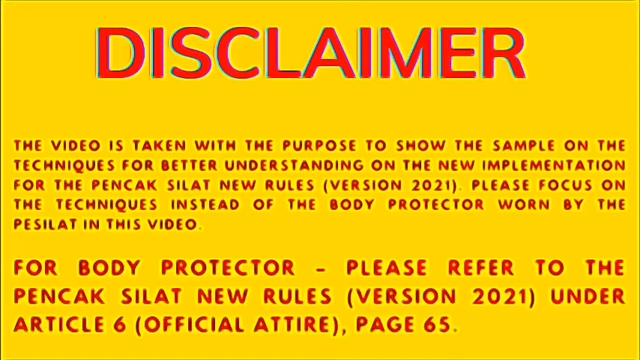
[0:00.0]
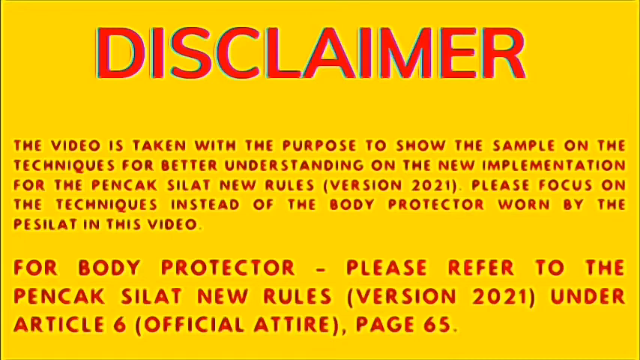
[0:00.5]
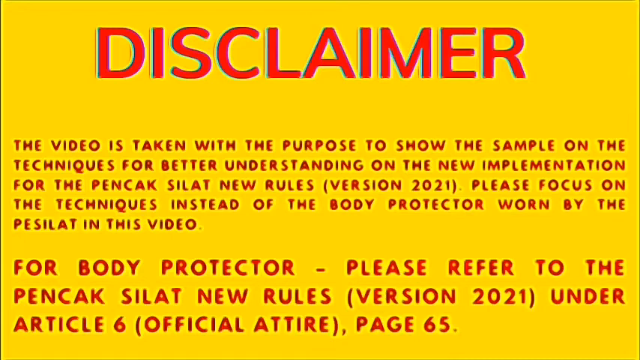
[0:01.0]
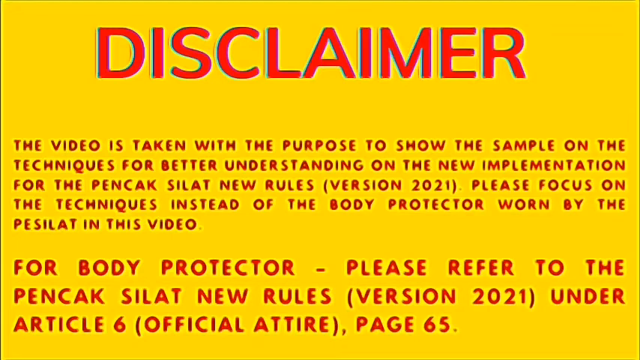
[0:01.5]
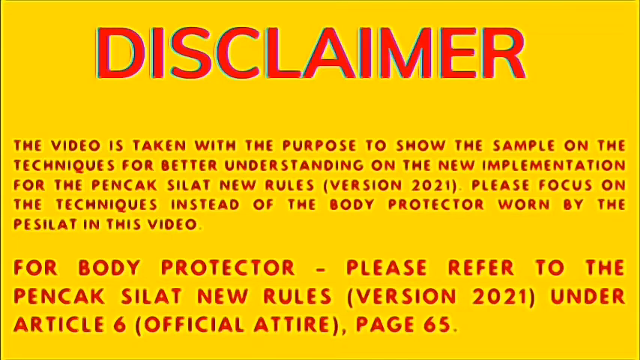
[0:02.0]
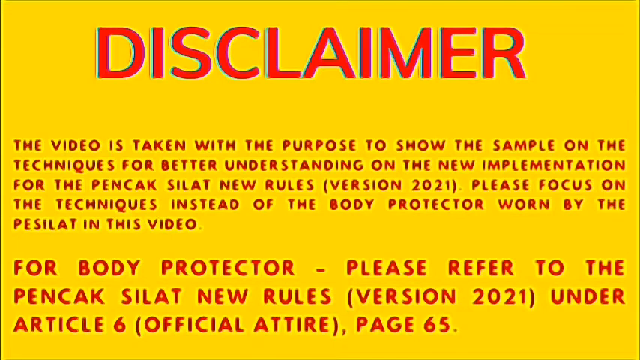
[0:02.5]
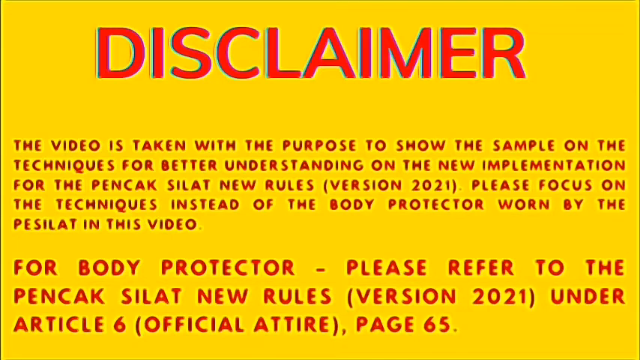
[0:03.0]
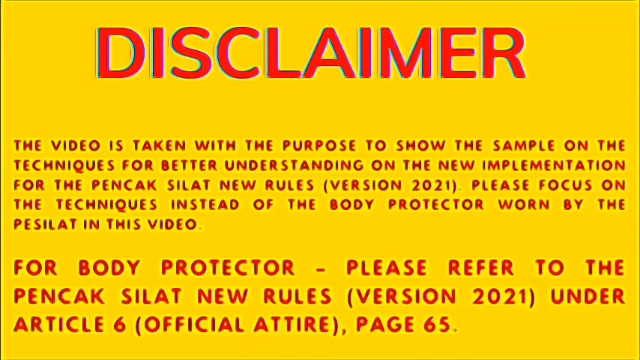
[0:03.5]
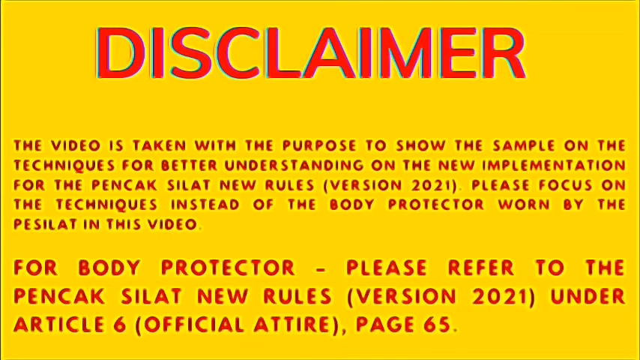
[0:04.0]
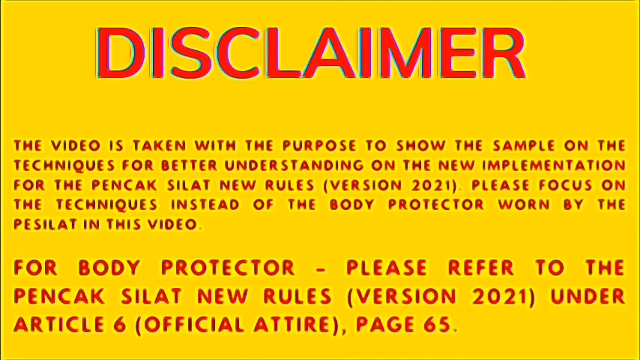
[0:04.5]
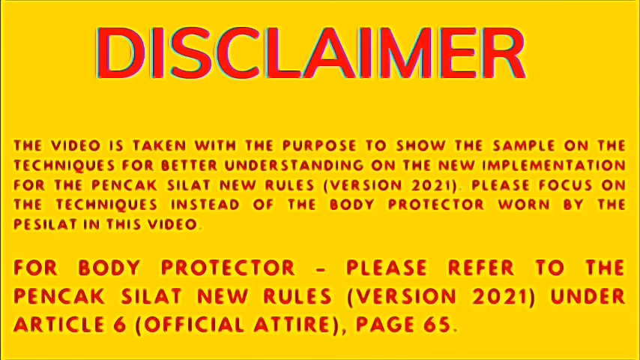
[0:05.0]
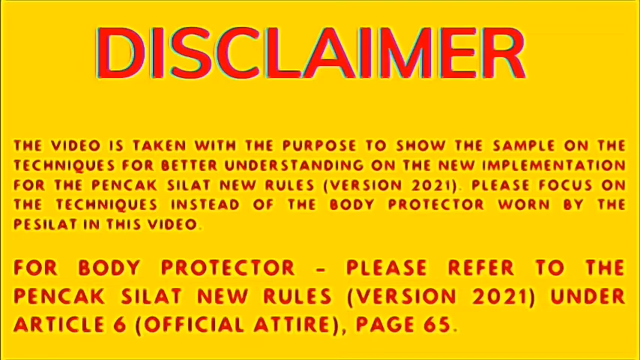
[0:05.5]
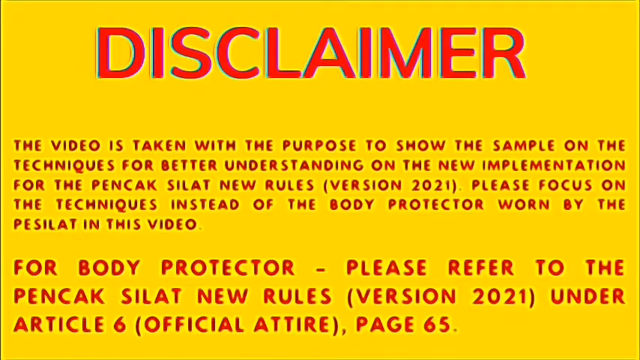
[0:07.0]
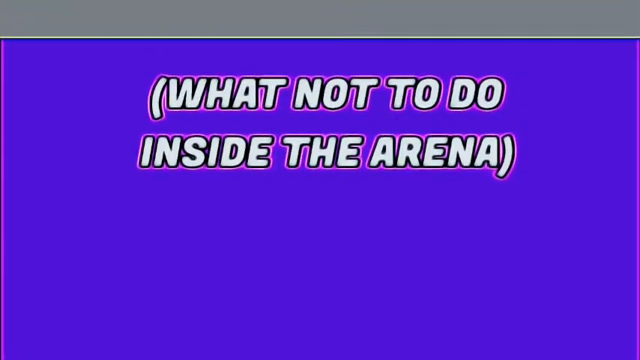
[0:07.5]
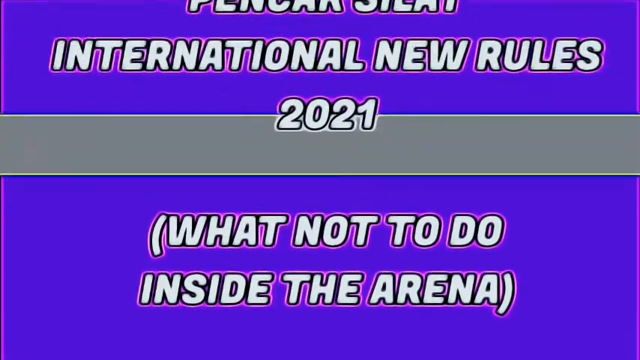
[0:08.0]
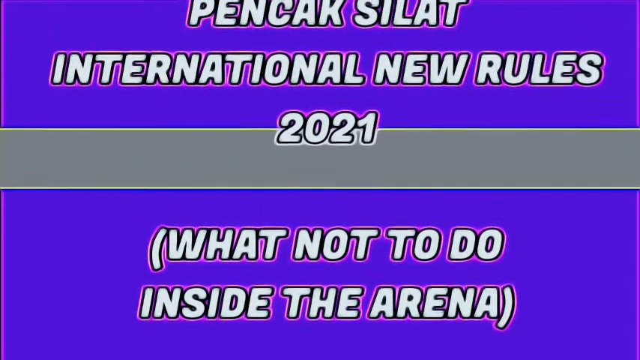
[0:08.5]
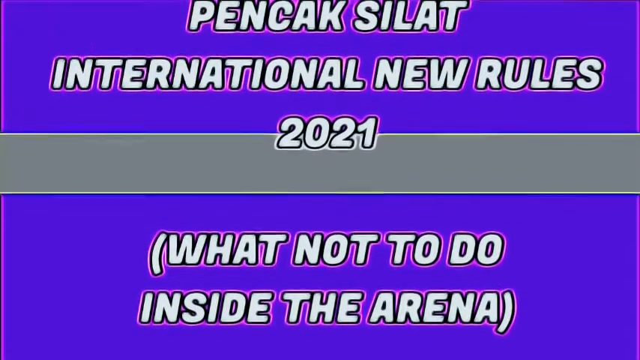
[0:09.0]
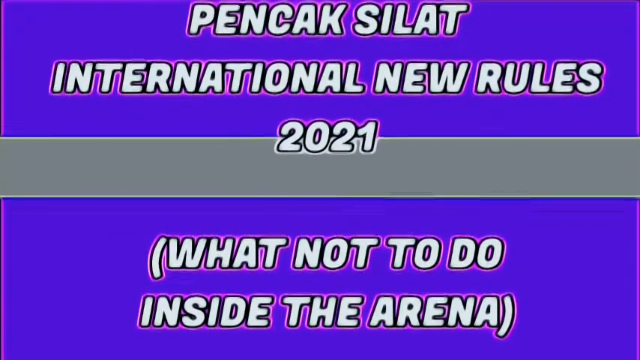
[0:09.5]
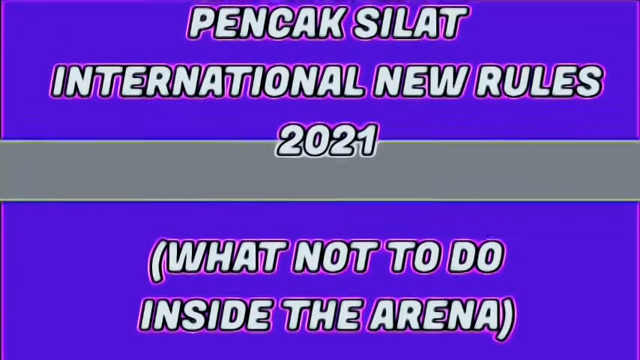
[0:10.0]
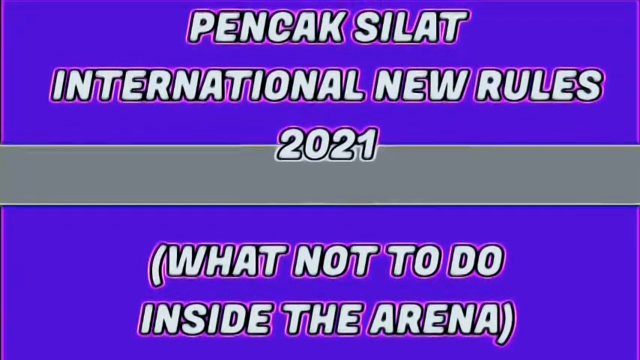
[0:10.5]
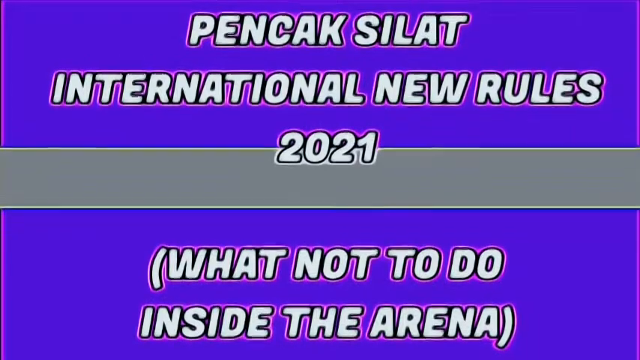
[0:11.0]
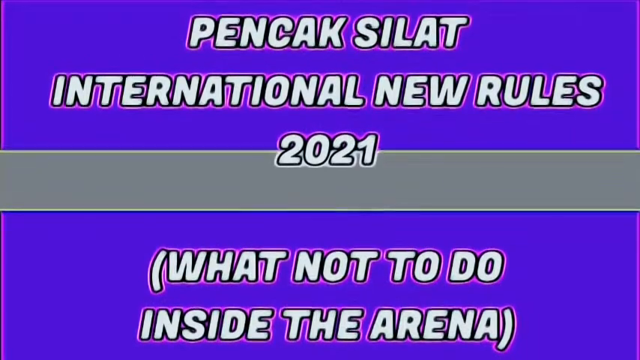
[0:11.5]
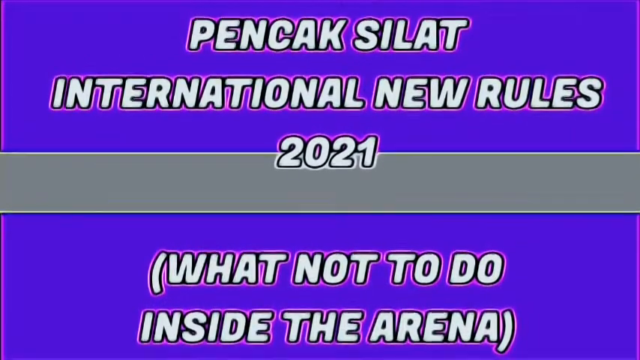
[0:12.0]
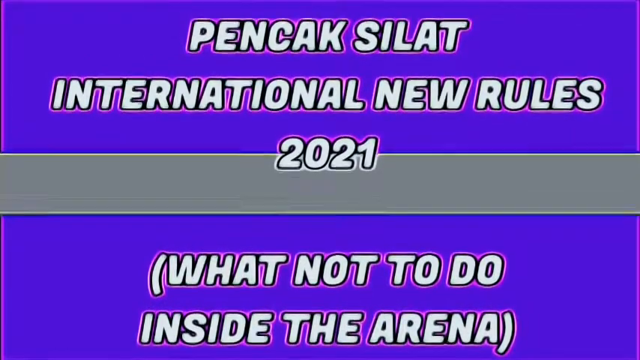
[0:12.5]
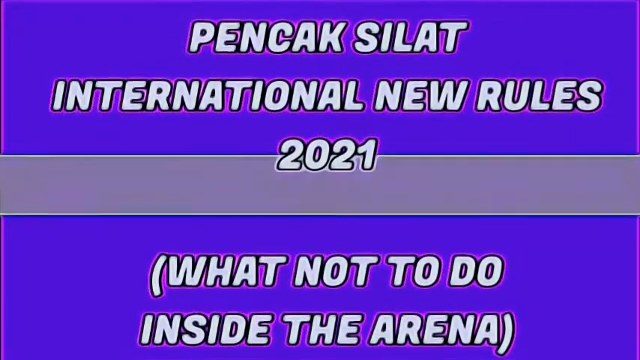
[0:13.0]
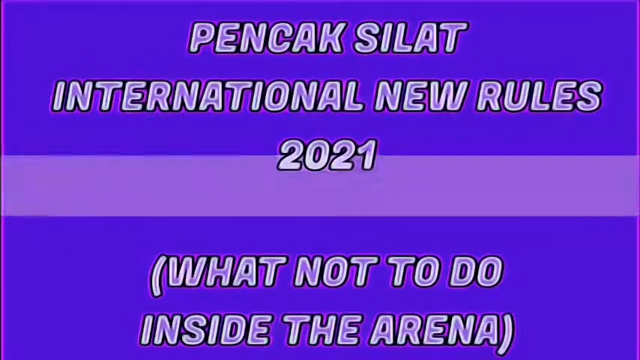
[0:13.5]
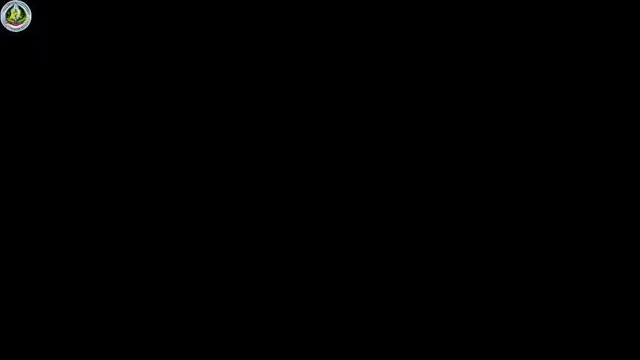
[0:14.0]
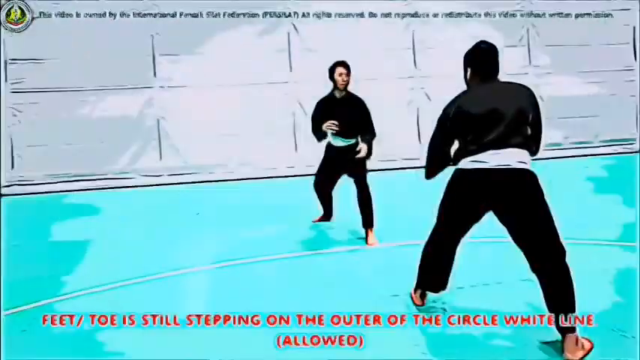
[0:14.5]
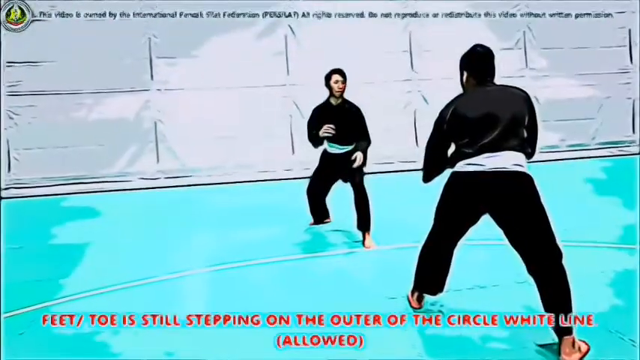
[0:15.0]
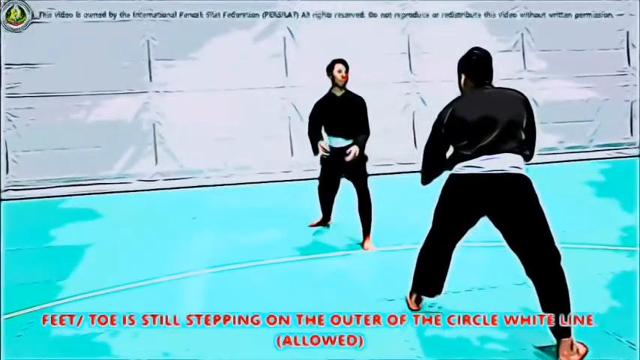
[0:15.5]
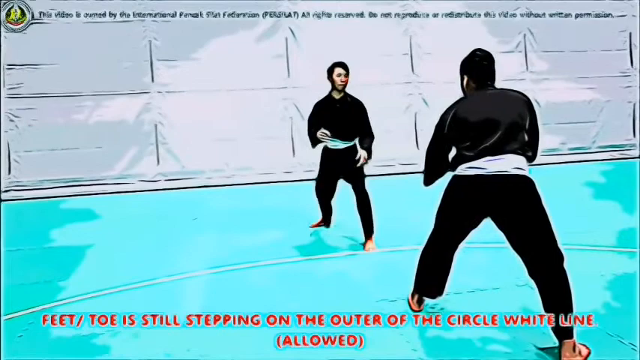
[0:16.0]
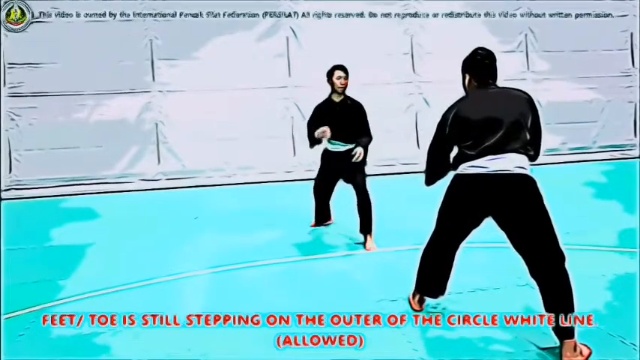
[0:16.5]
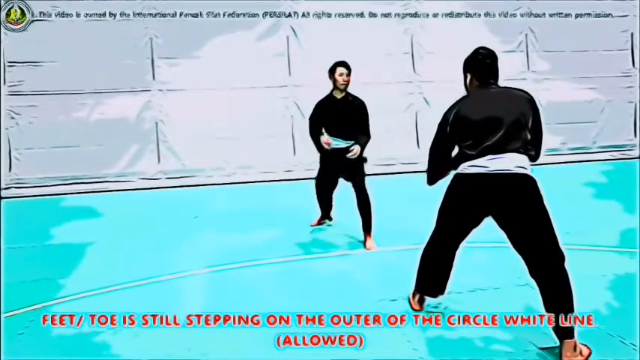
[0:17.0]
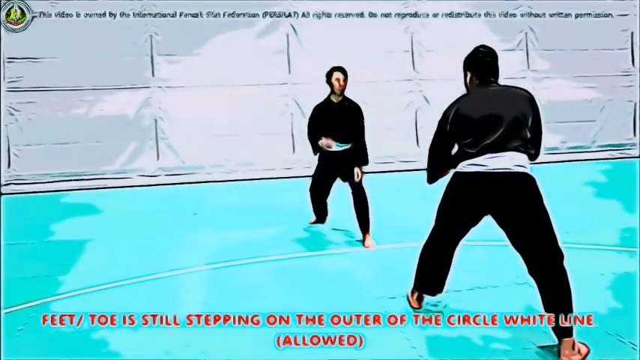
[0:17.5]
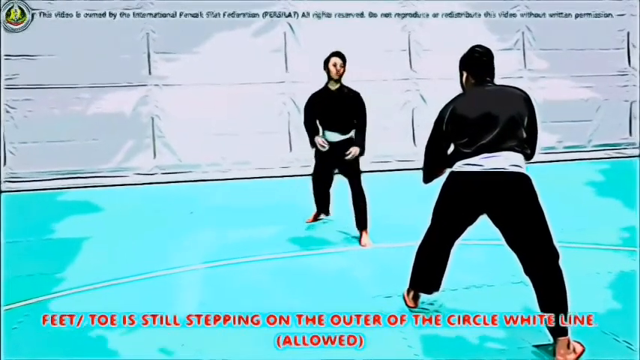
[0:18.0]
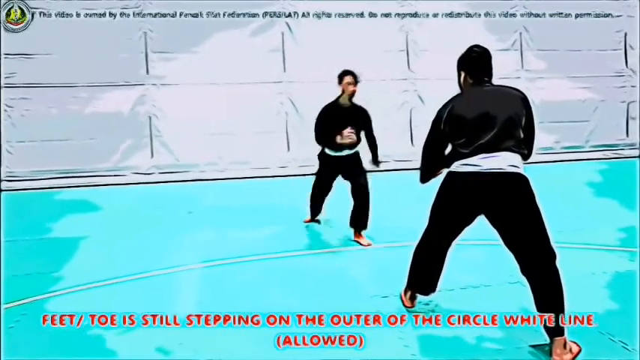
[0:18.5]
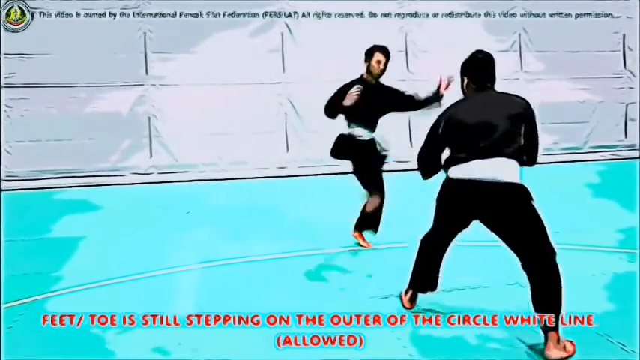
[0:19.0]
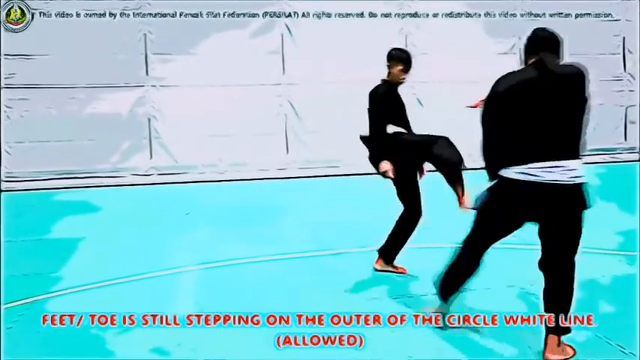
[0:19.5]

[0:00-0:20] Text reads: "This is a disclaimer, and the video is taken for the purpose to show the sample and the techniques for better understanding of the new implementation for the PENSAC SALAT new rules version 2021." Further text refers to body protectors and to the international new rules 2021, and a heading reads "what not to do inside the arena". An animation follows of two players, apparently playing a game called Pensac Salat under the new rules. Both players are in an arena and wear black uniforms. One person kicks the other.